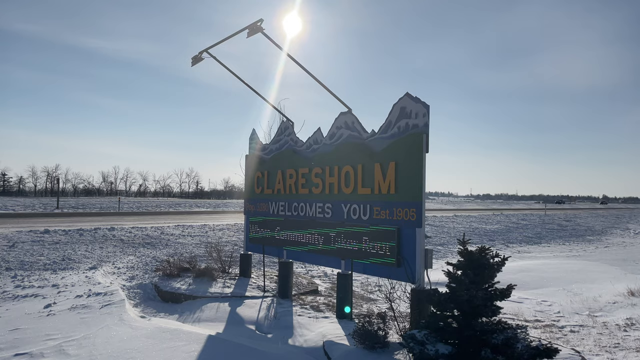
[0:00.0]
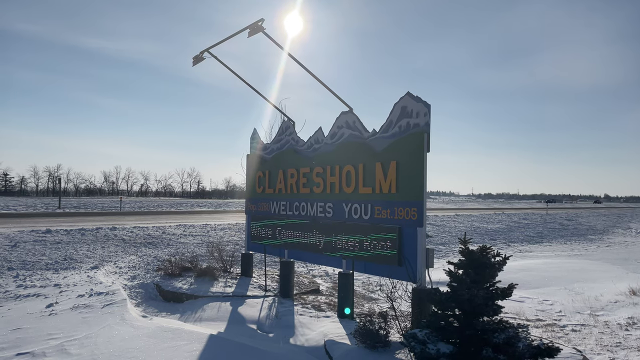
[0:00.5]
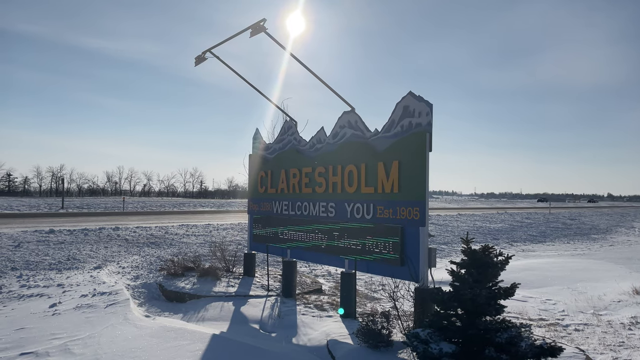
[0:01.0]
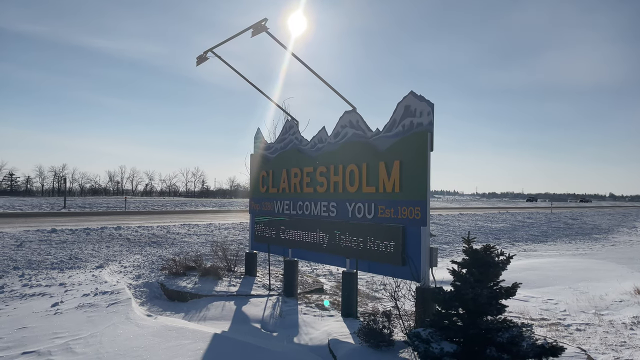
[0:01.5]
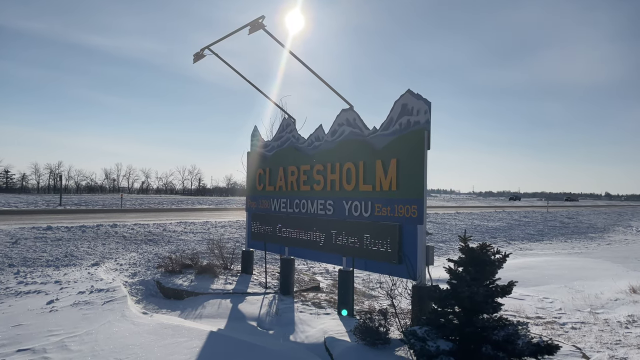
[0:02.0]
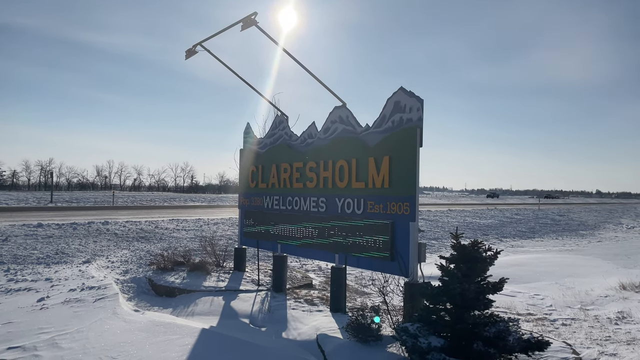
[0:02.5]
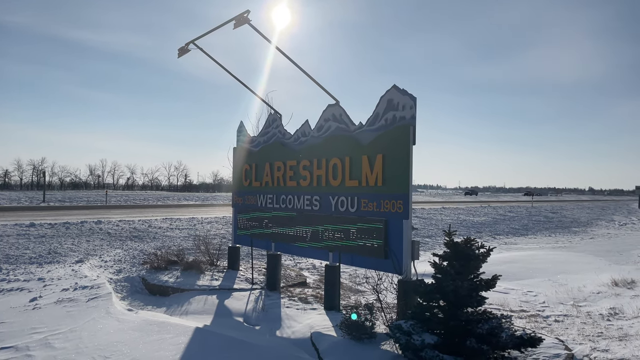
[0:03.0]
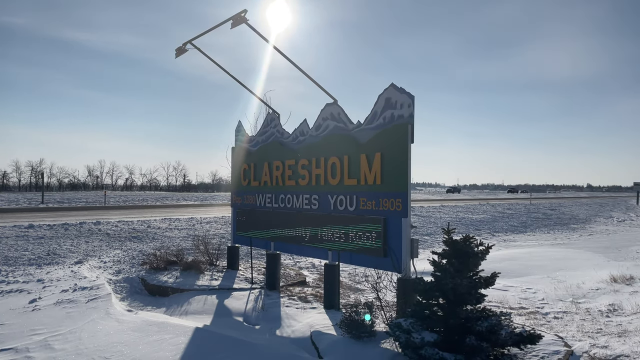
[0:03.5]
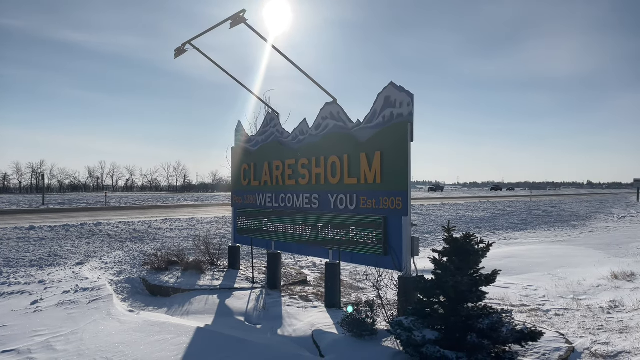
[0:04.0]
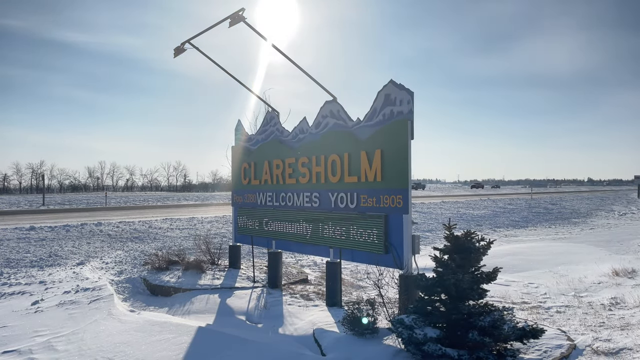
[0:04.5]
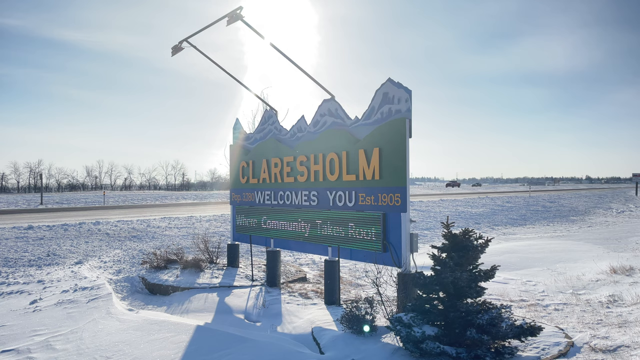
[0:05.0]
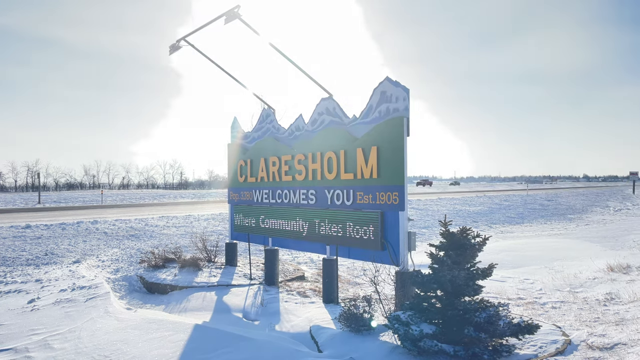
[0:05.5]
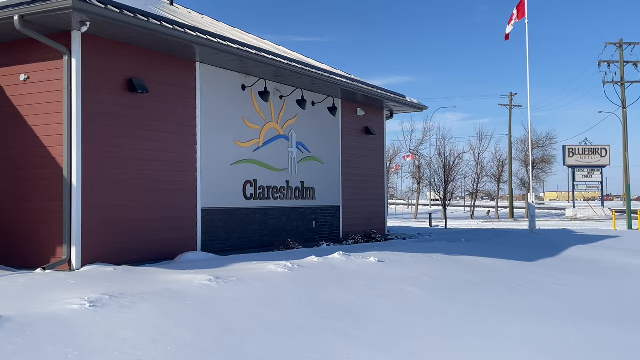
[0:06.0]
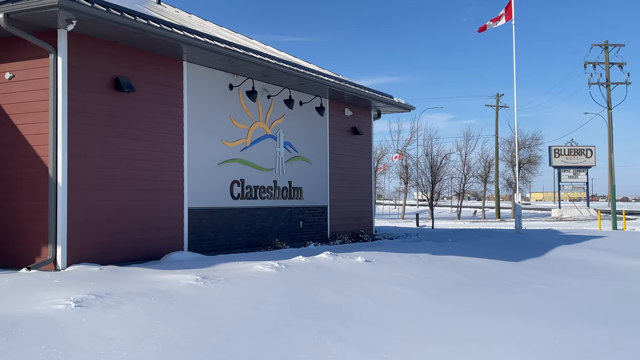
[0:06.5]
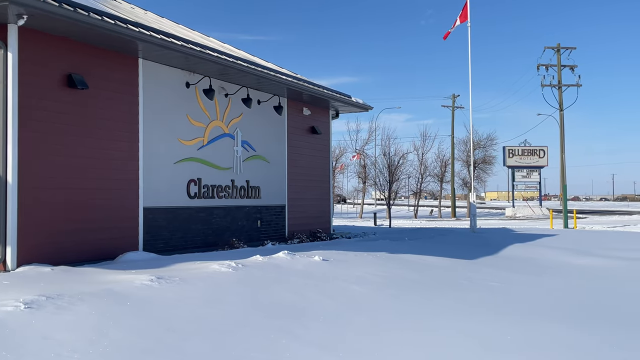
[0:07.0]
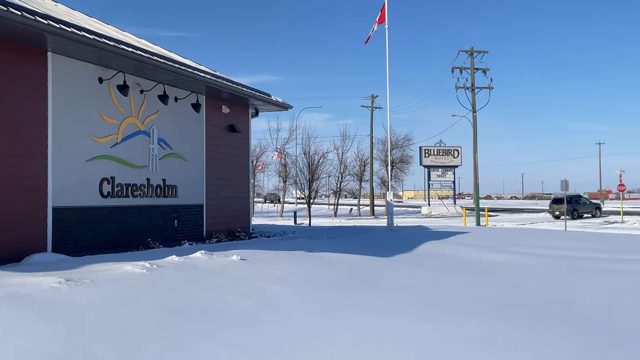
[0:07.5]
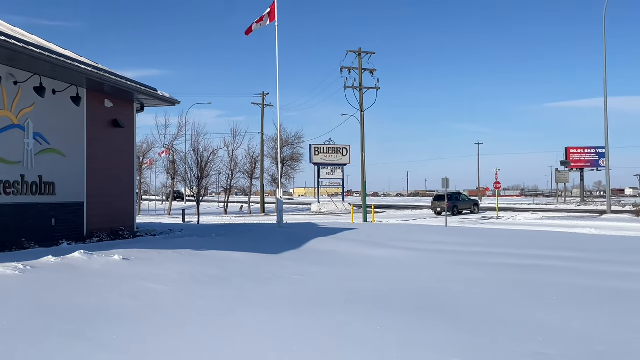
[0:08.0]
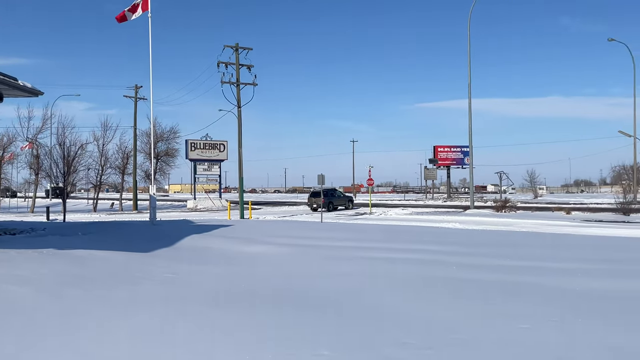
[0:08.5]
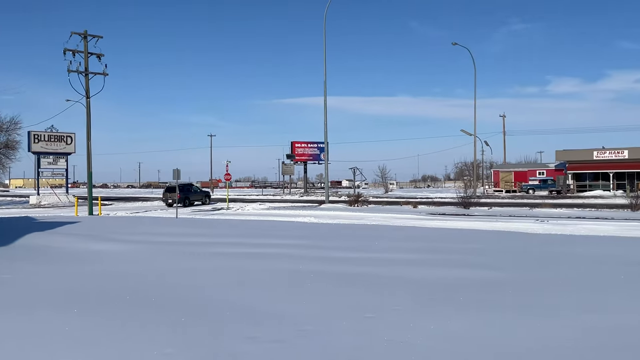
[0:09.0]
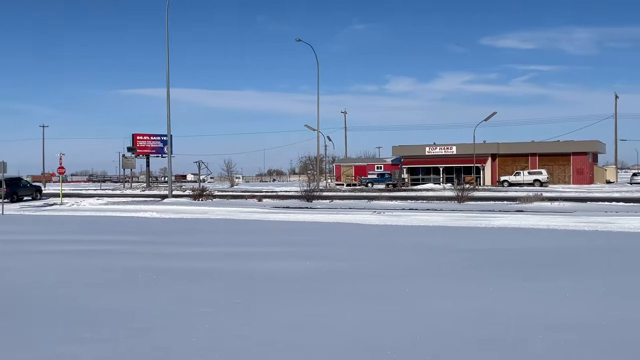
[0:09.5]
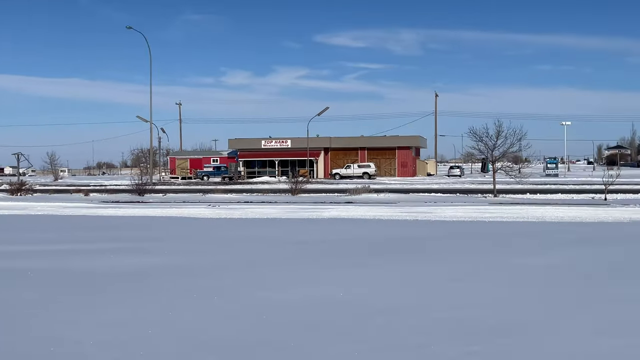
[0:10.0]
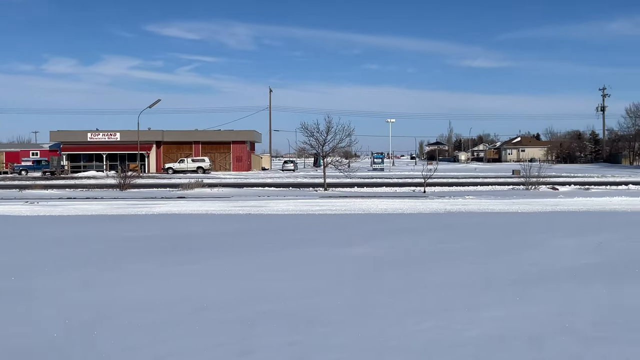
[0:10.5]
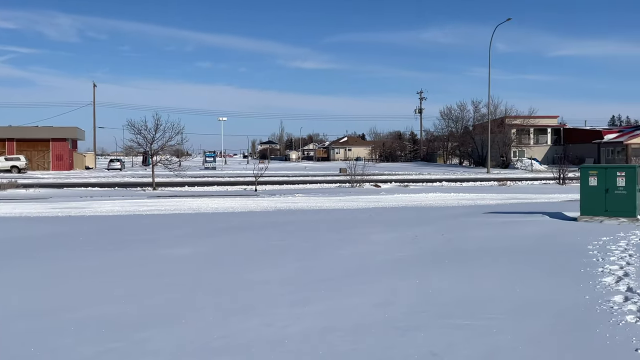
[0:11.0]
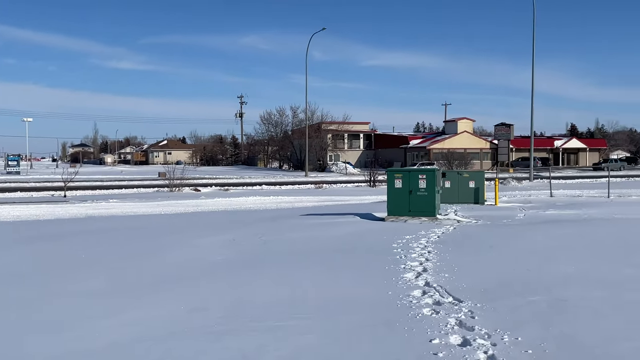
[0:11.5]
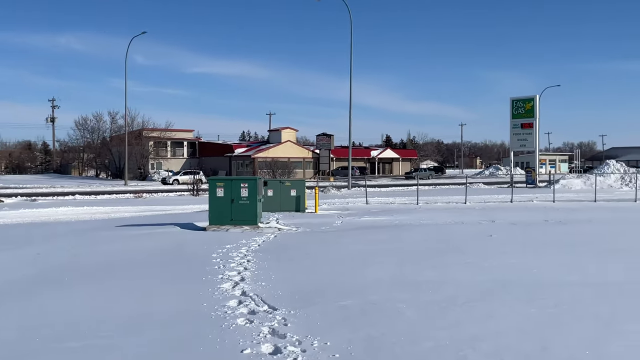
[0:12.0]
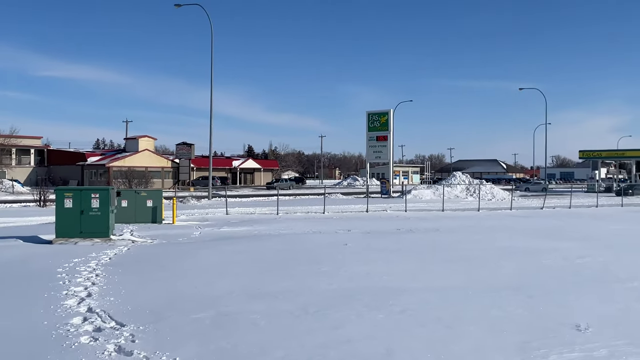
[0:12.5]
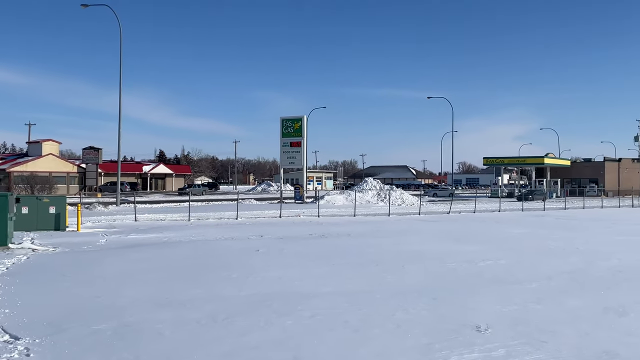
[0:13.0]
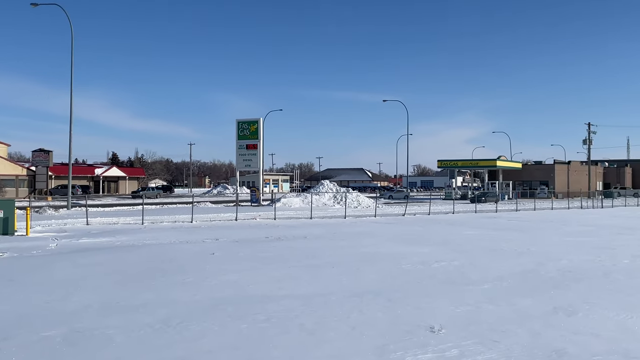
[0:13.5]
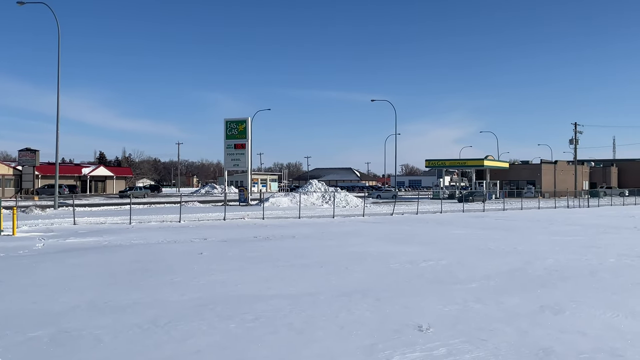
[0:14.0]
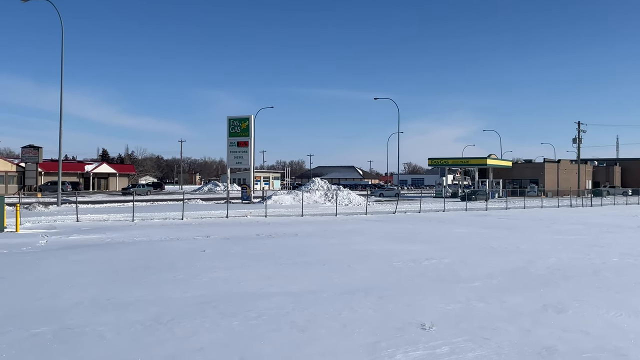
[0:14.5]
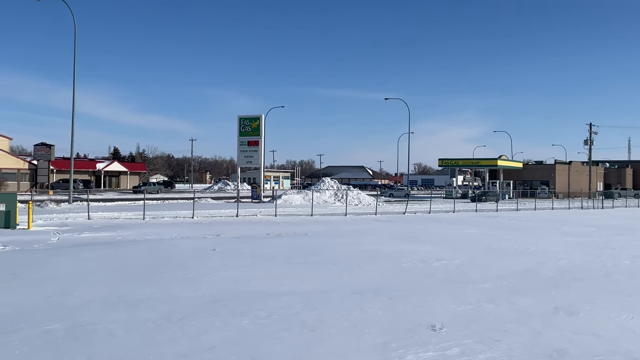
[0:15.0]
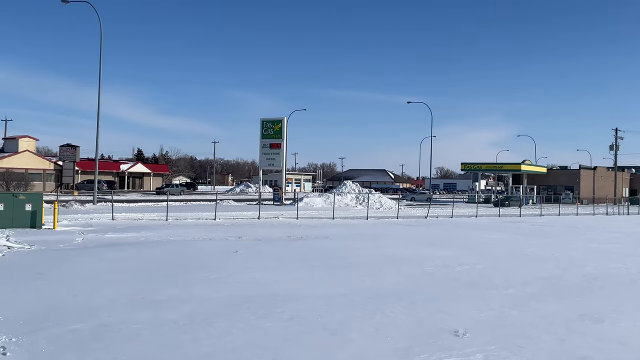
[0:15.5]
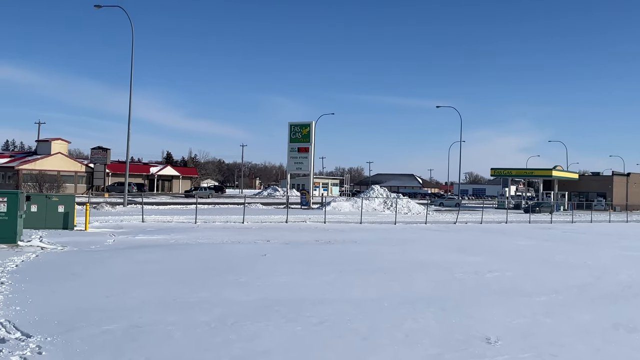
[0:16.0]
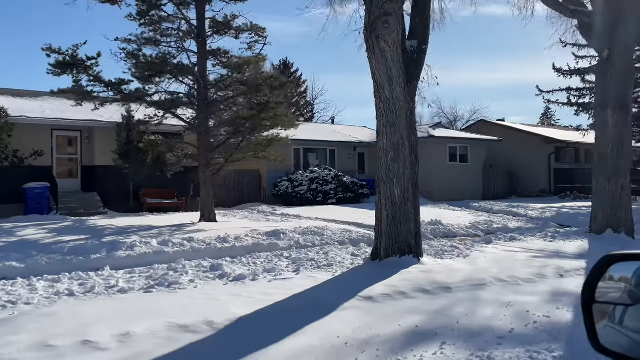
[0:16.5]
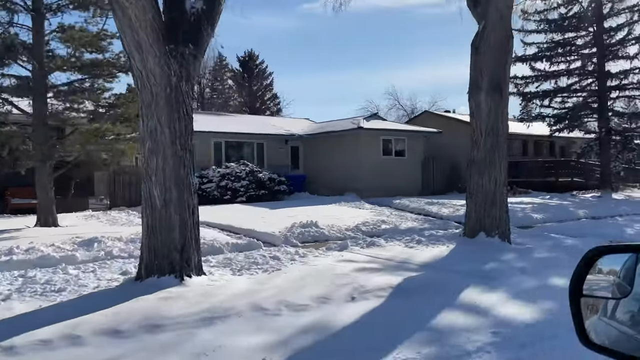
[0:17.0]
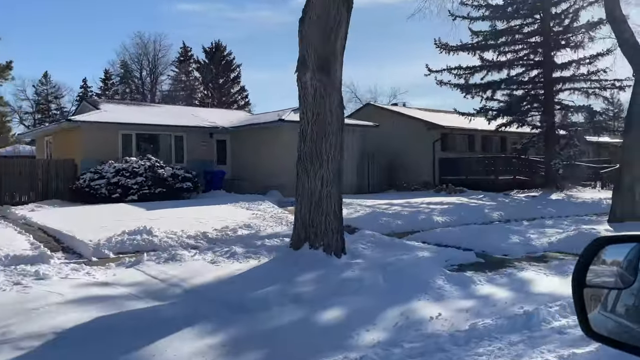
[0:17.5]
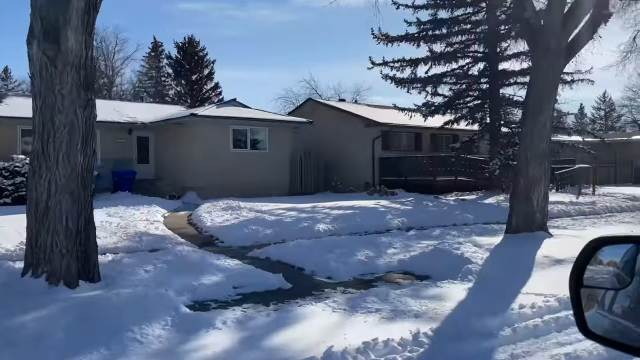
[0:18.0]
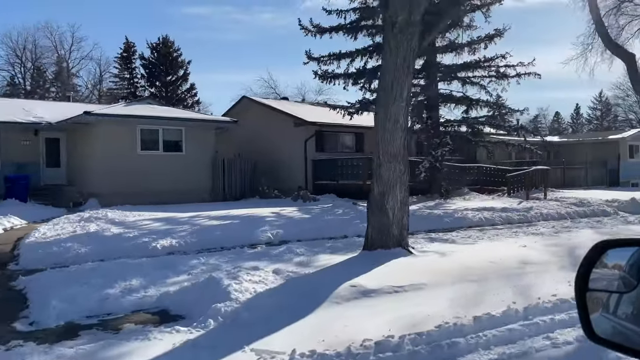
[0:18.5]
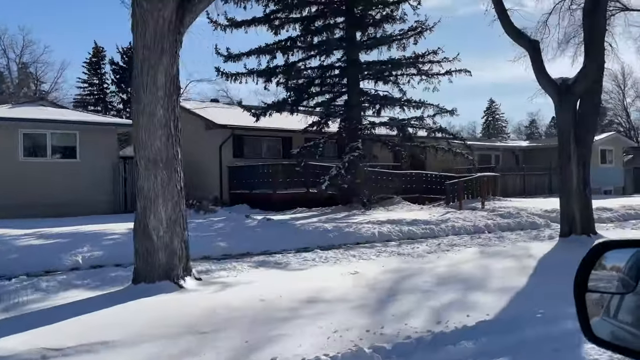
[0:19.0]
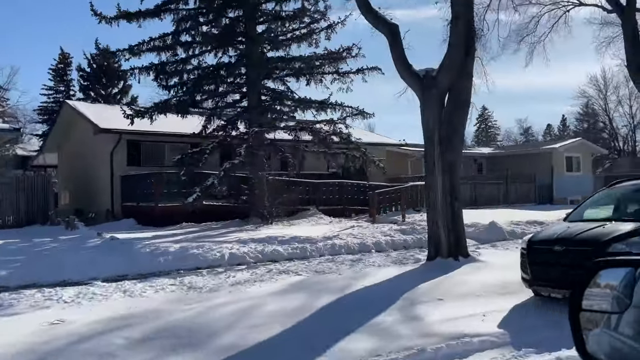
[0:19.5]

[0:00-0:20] Someone films a sign that appears to be a town sign, the kind seen when entering a city on a highway or road. It shows the town of Claresholm, and right under that it says "Welcome to You" and that the town was established in 1905. At the bottom of the sign it says "Where Community Takes Root", with "community" in bold white text. The sign's background is blue. Behind it, some cars are kind of driving by on the highway. It looks to be winter, as there is a lot of snow all over the place. The video then shows more of what seems to be the surrounding welcoming area.